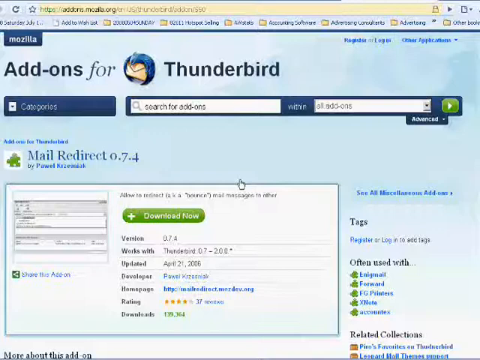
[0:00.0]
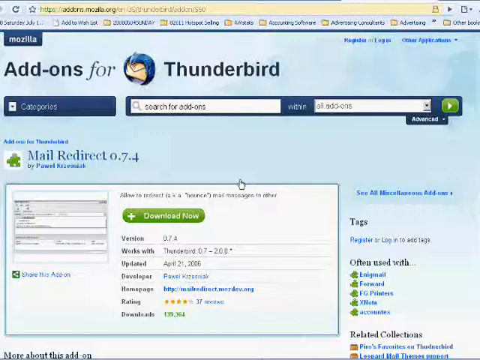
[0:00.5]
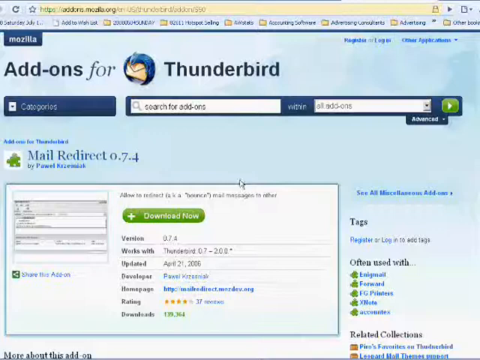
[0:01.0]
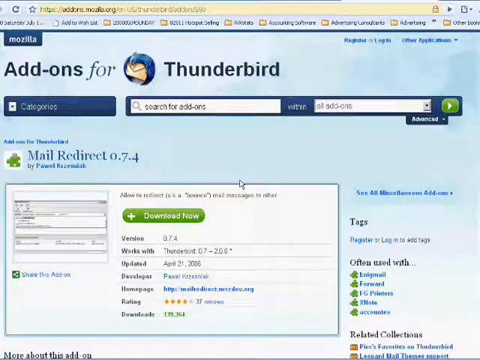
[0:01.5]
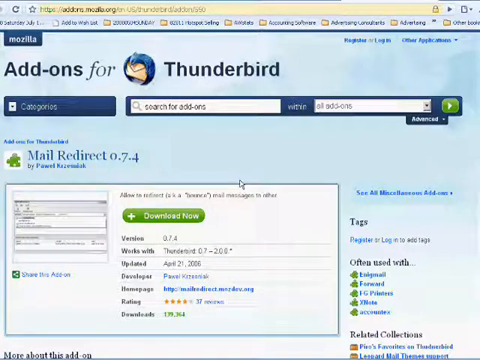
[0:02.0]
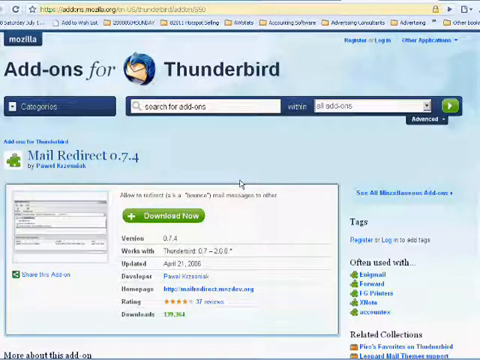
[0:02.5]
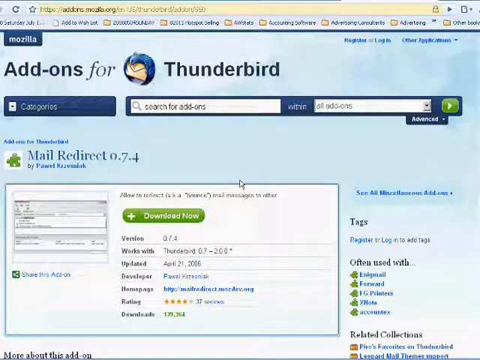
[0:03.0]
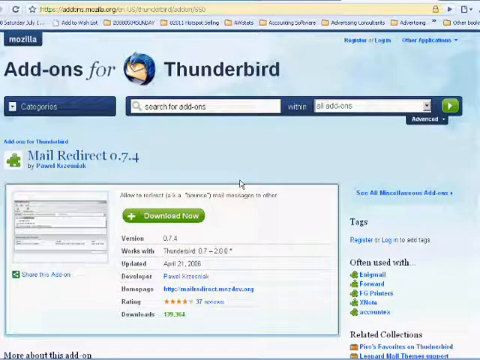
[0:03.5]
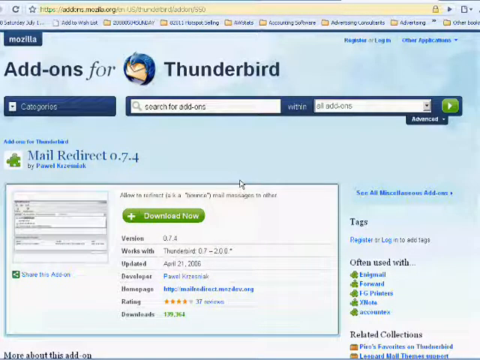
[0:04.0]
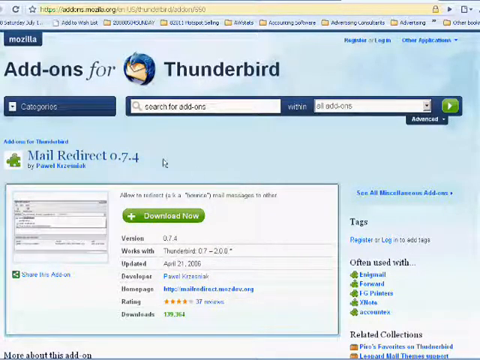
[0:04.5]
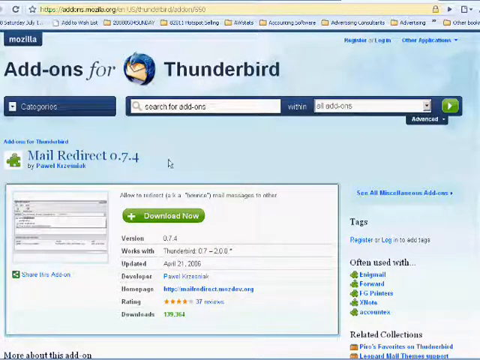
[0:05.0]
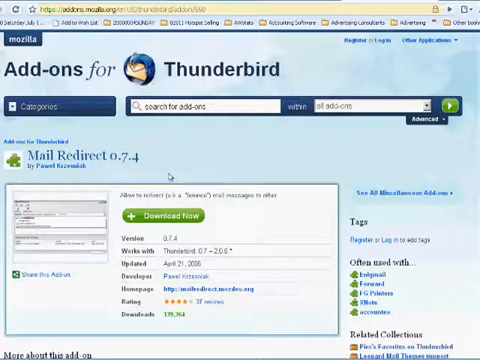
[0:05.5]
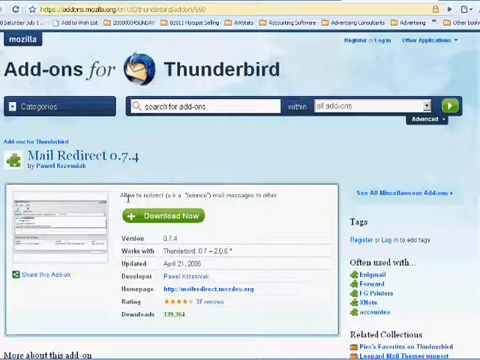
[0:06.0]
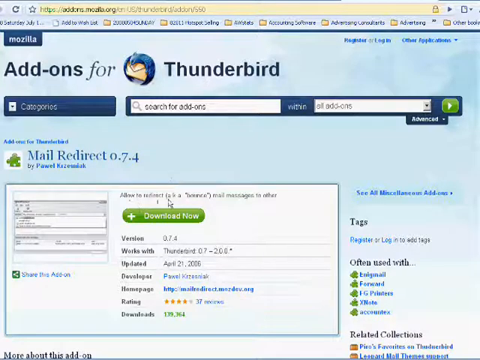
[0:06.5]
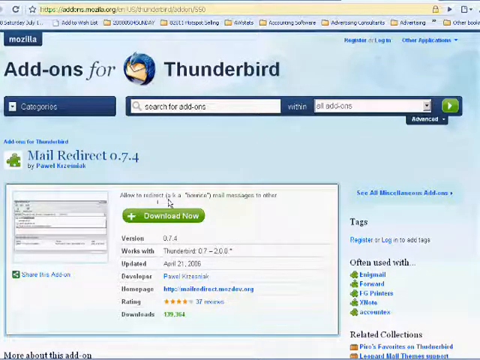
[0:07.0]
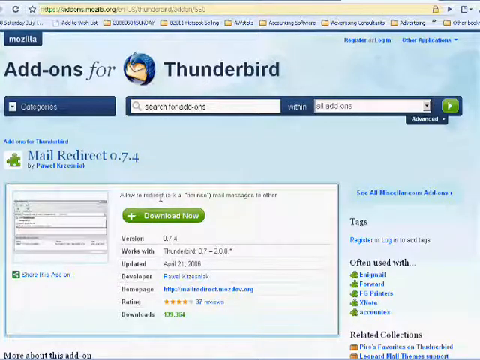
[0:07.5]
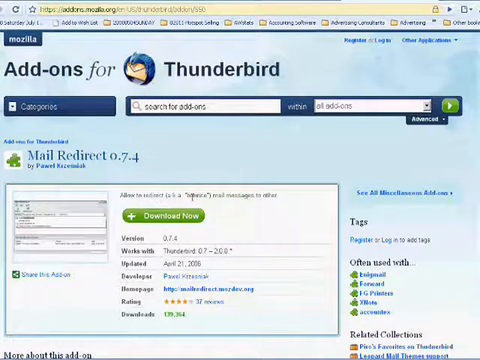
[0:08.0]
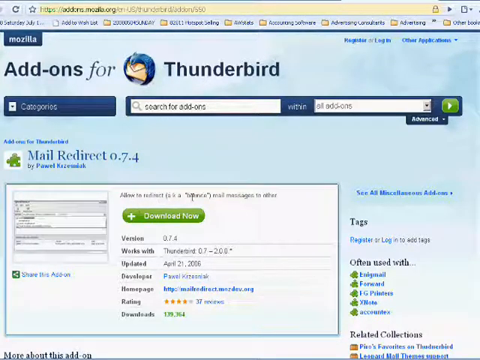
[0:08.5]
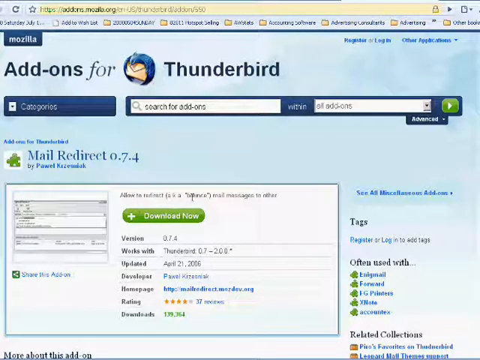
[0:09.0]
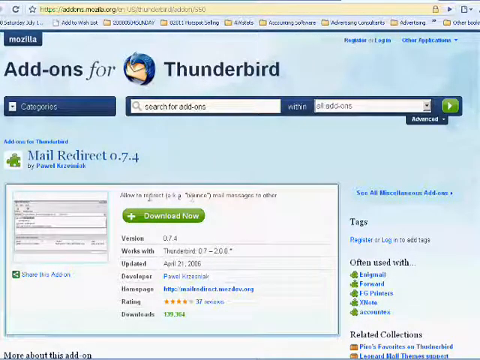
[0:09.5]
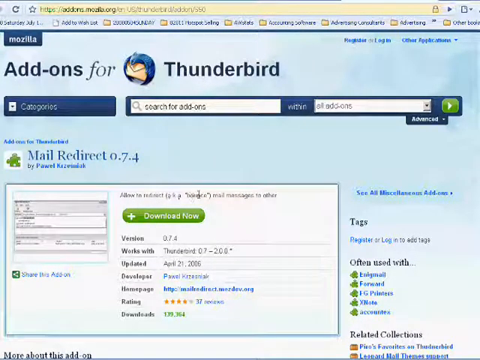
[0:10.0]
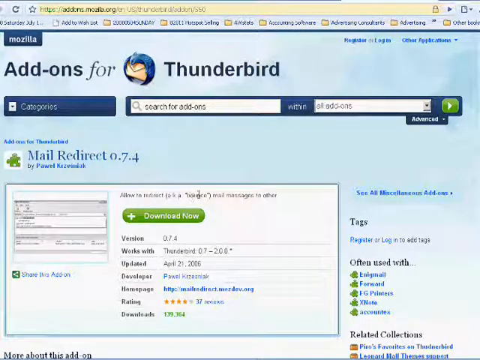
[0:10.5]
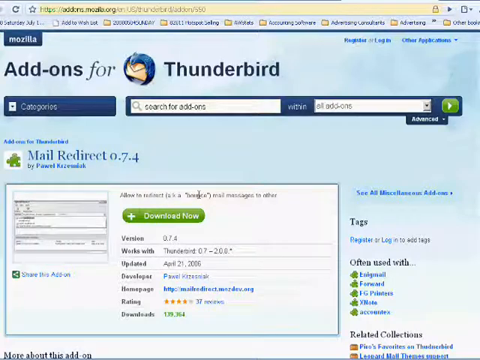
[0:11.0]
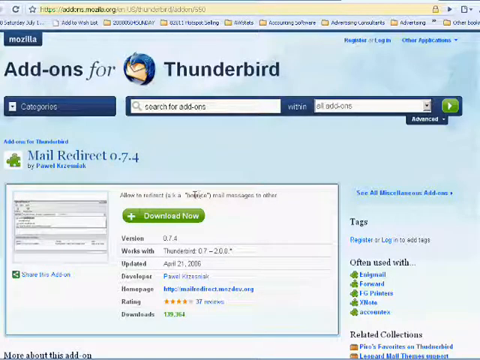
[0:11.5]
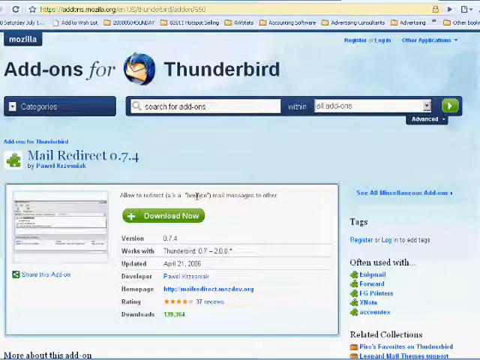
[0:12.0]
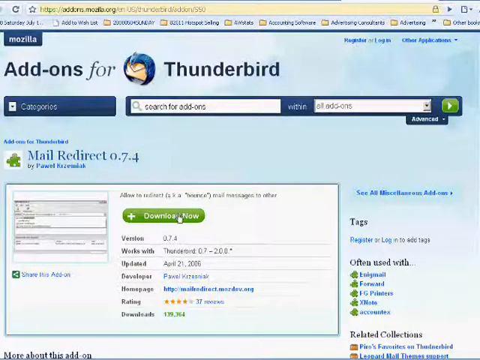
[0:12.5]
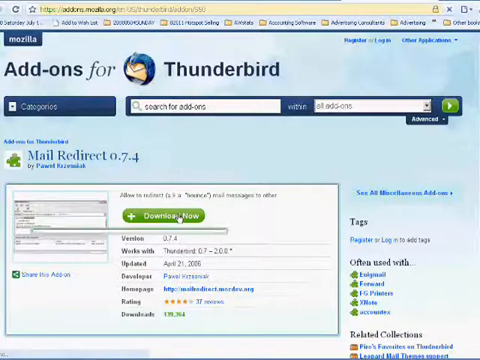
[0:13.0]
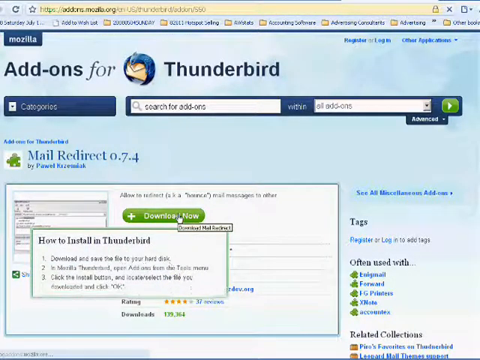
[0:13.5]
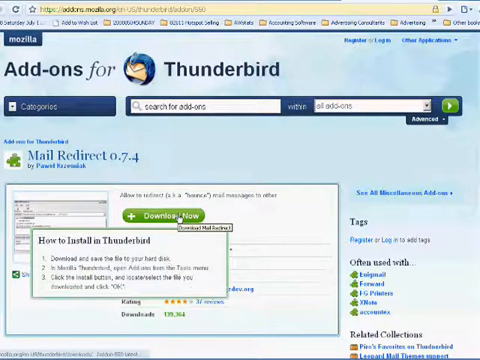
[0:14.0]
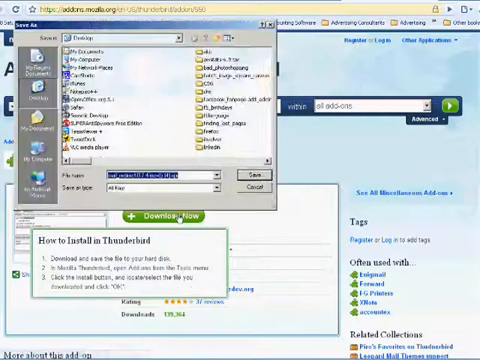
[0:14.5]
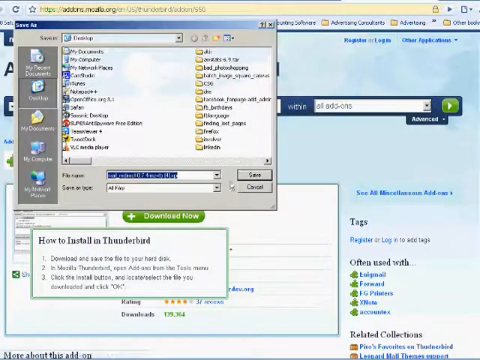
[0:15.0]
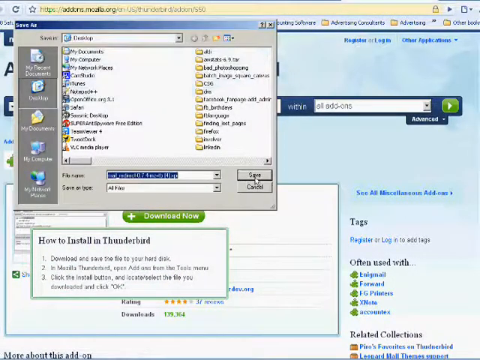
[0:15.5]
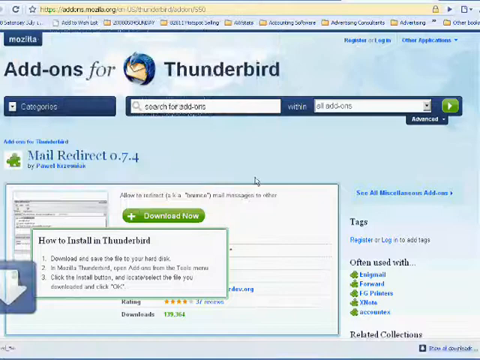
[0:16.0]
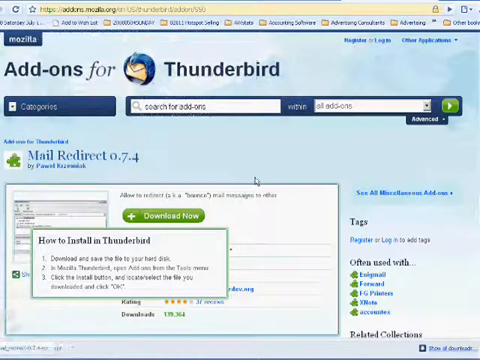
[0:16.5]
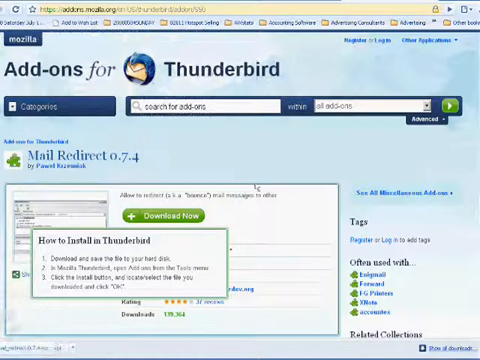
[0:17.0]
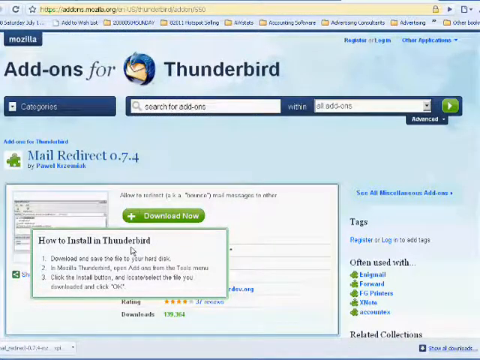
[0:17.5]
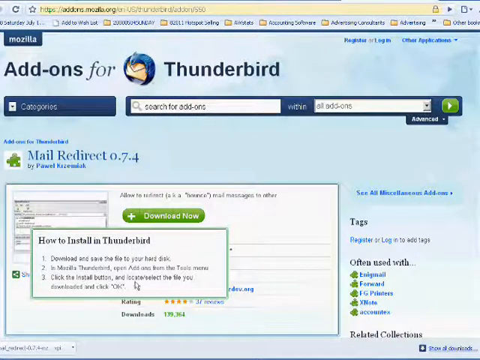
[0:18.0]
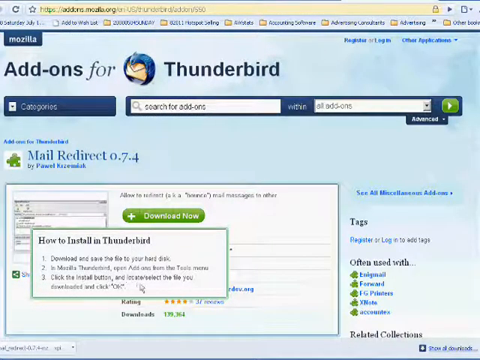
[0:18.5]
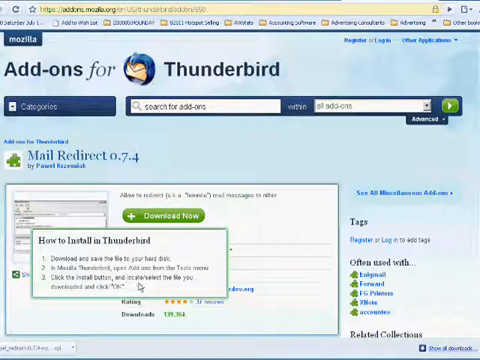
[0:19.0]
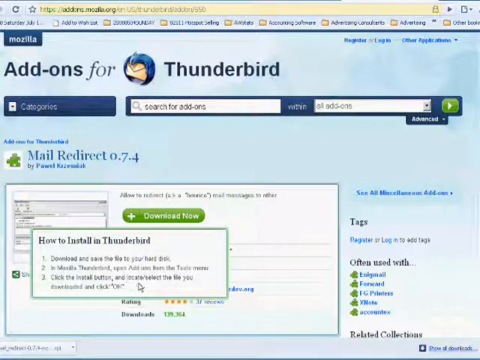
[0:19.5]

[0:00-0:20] A web page in Mozilla reads "add-ons for Thunderbird," with some sort of logo at the top, a search box for searching add-ons, and a tab for advanced searches. Underneath, it says "add-on for Thunderbird" beside a logo of a green puzzle piece on top of a red square, and below that is text reading "mail redirect 0.7.4" with the name of a creator. A screen then shows information about this add-on: the version history, apparently the other apps it works with, when it was last updated, the name of the developer, the home page address, the rating from users, the number of reviews, some download information, and the tags the add-on was marked with. Other tabs and bookmarked locations are visible on the browser toolbar. The cursor moves over the download information, and the user selects download now. A save-as pop-up window appears showing the desktop, which is a little blurry, where the location for saving the download is chosen. Another pop-up box says "how to install in Thunderbird" and lists directions, including "save file to your hard disk," "in Mozilla Thunderbird. Open the add-ons from the tools menu," and "click the install button and locate / select the file you downloaded and click okay." After the file is saved, an arrow appears showing that the add-on is downloading.